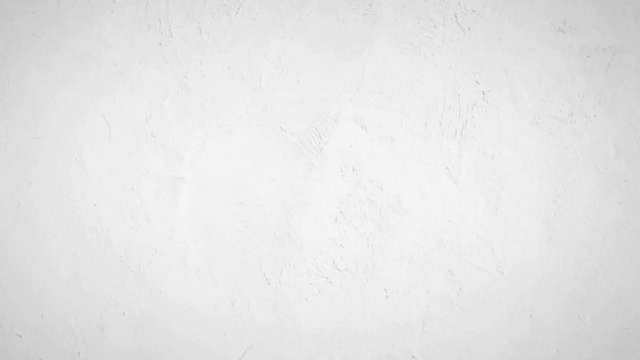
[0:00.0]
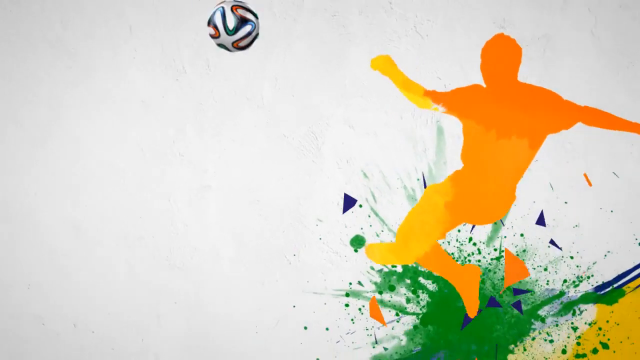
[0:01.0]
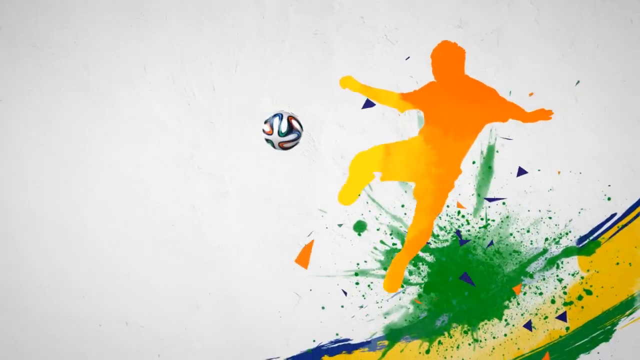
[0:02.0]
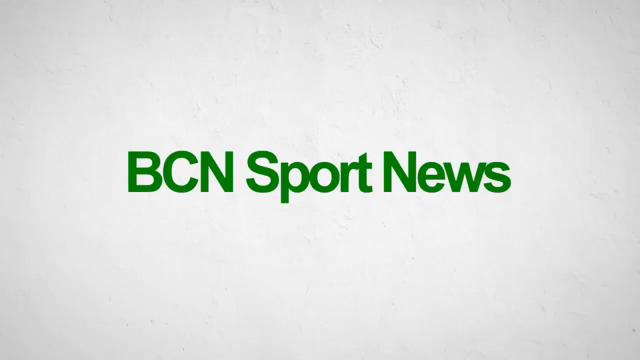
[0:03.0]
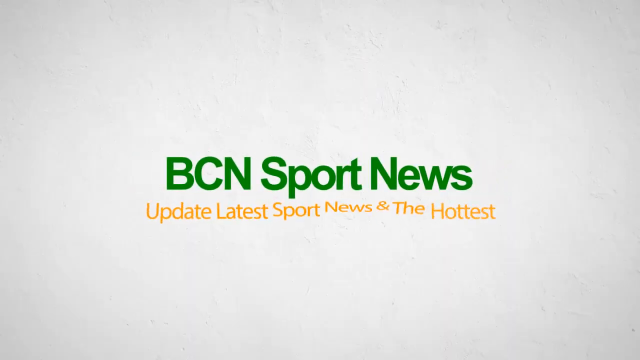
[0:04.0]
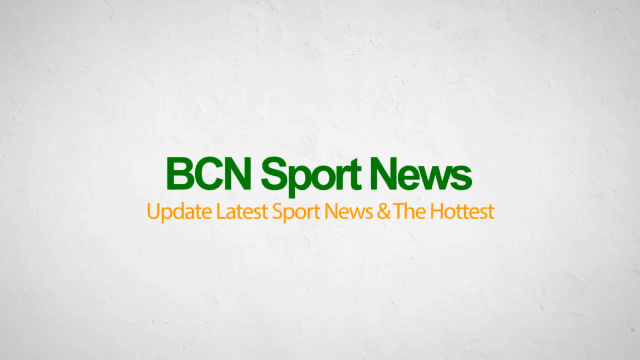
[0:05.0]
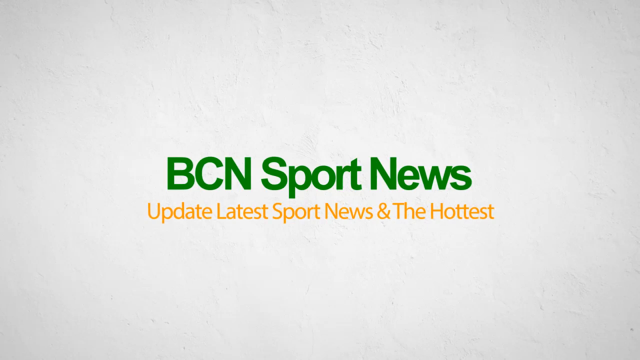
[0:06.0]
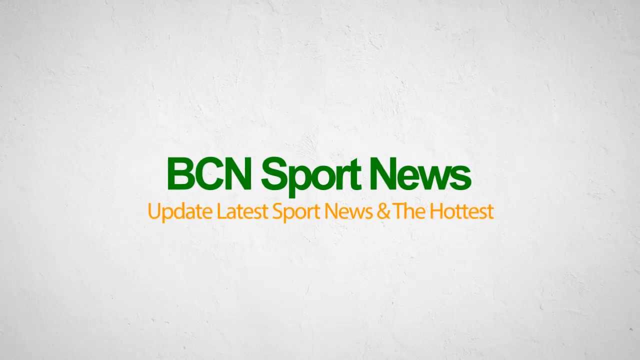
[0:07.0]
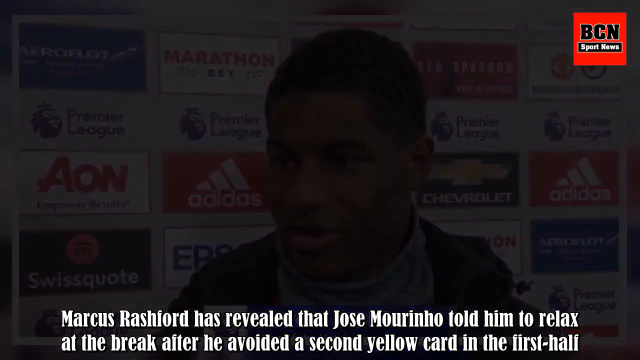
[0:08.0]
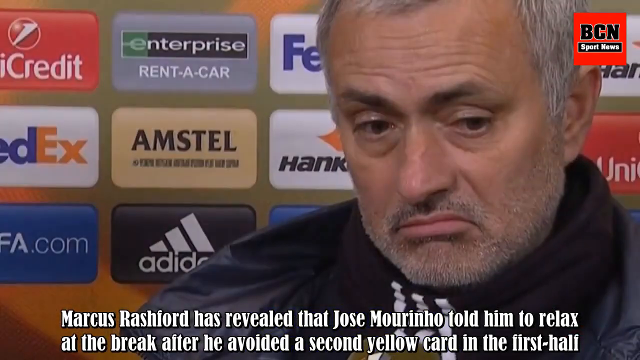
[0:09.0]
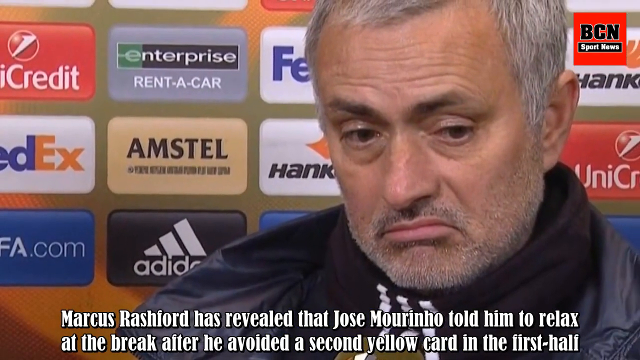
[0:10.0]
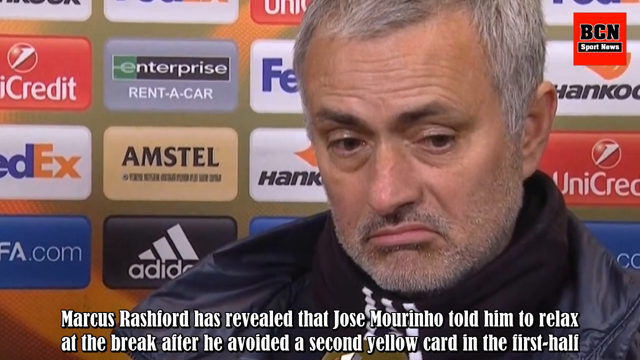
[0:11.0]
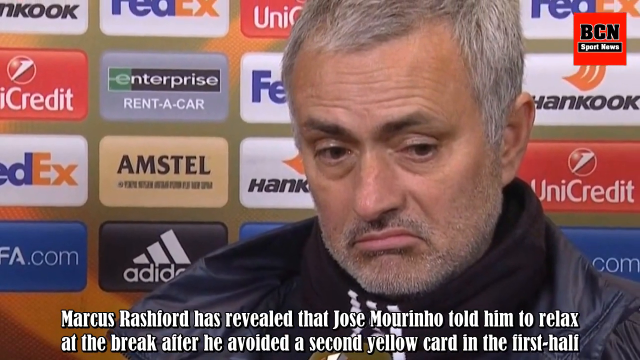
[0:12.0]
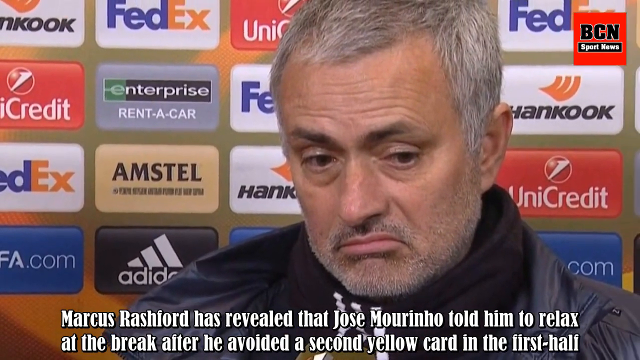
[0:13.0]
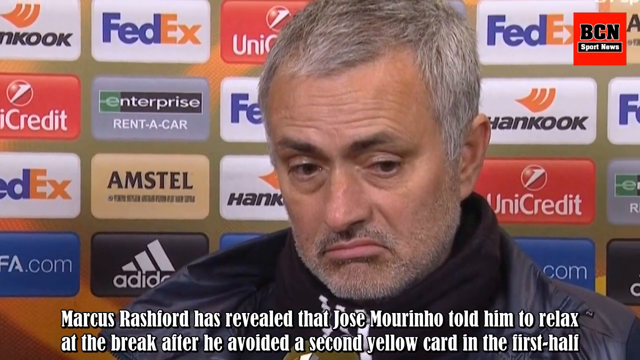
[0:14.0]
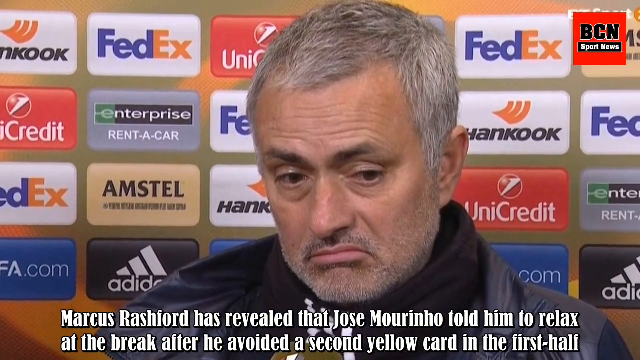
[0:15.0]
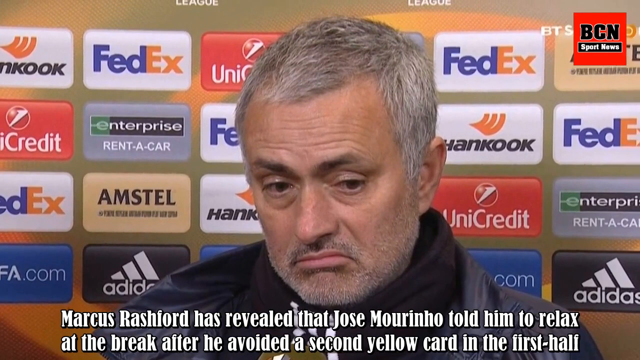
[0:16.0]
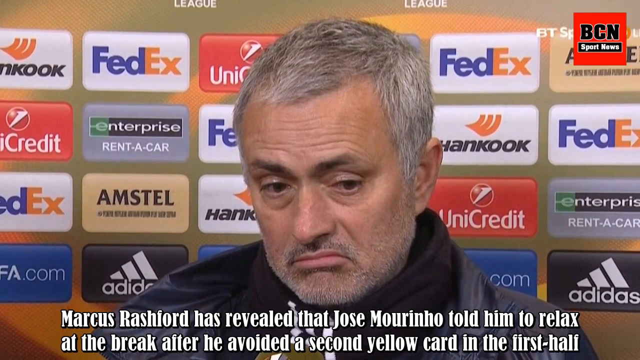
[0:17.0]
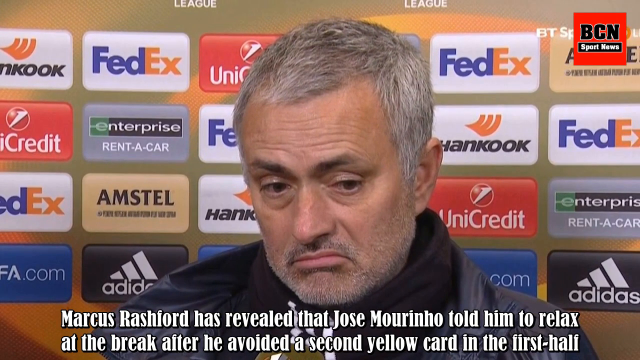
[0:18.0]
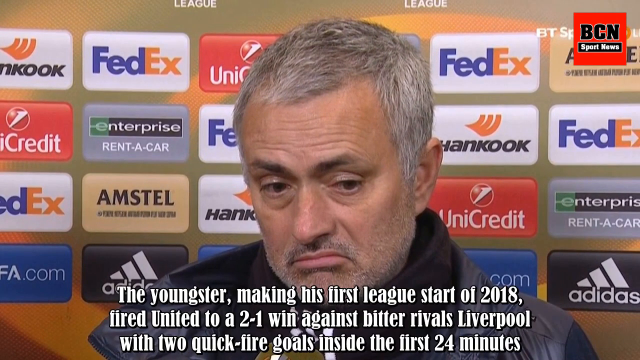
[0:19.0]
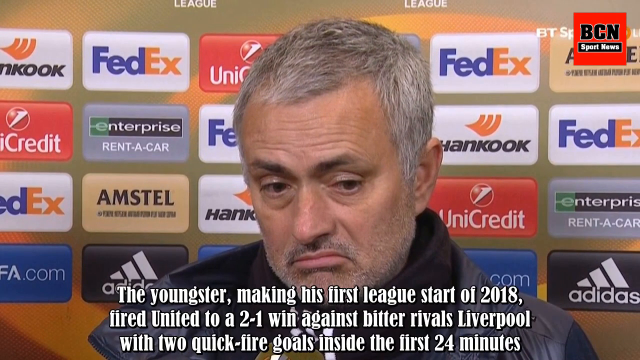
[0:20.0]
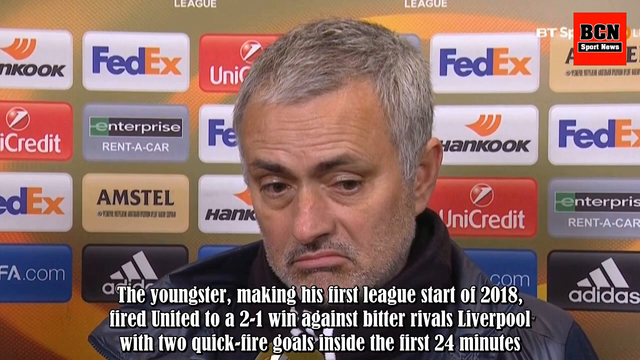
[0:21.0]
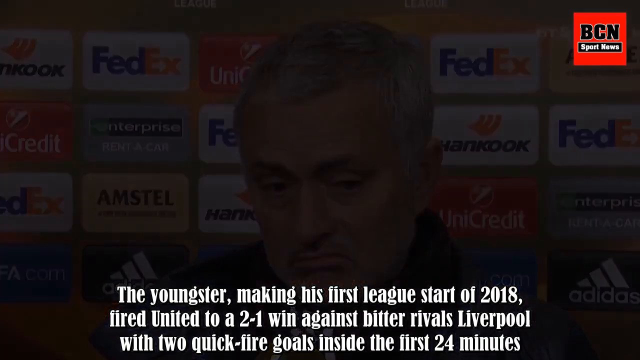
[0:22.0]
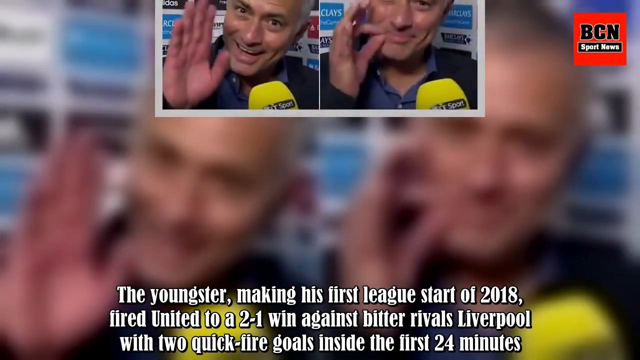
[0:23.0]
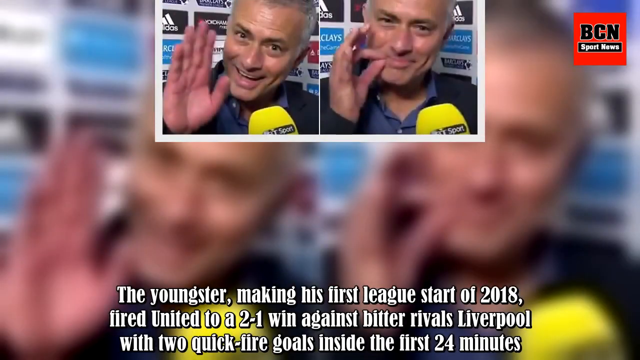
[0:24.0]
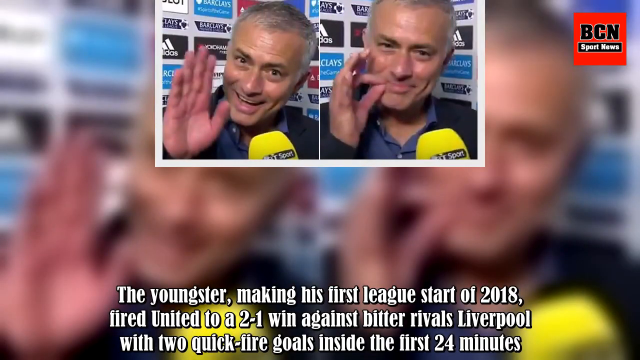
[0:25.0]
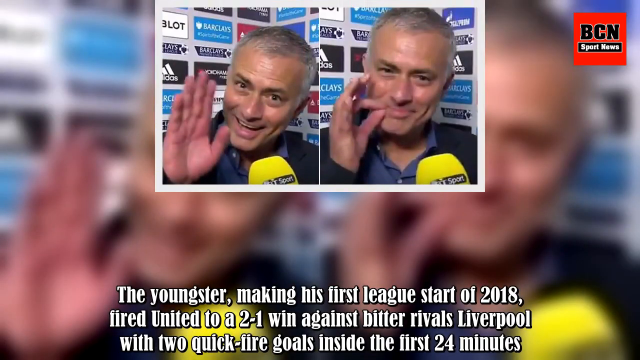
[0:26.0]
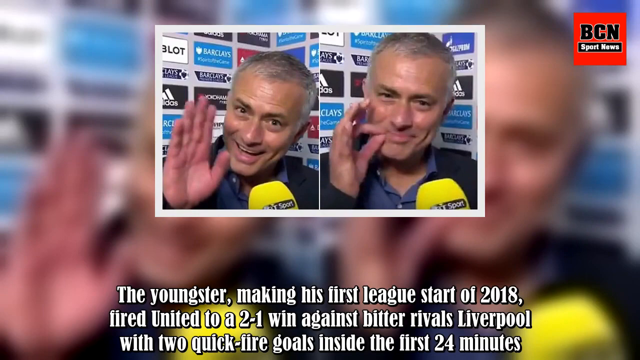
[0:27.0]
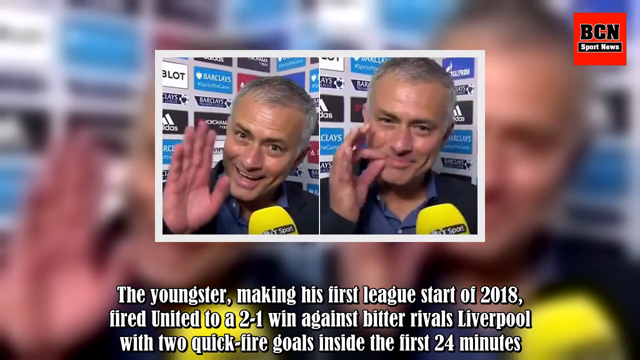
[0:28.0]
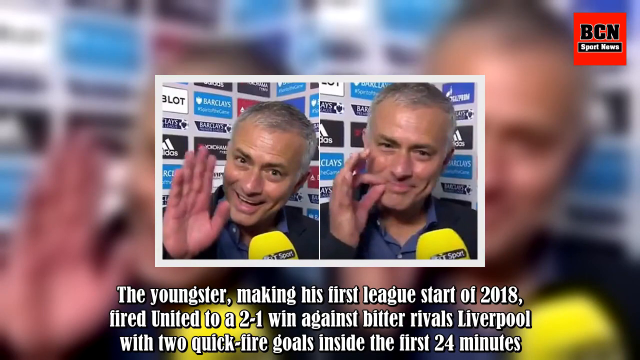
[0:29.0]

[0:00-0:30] The video appears to be a soccer presentation. It opens with a computer-graphic figure, not a real person, kicking a soccer ball toward the screen, revealing the text "BCN Sports News" in green and "Update Latest Sport News" in yellow. The picture flashes to another area where a person is seen briefly before it fades into text at the bottom reading "Marcus Rashford has revealed that Jose Marino told him to relax," with more text below that is partly out of sight. Next comes a person who looks like possibly a coach, with an upset expression, looking kind of sad; behind them are what seem to be advertisements for companies such as FedEx, Unicredit, Enterprise and Rent-A-Car. This fades out to a side-by-side picture of the same person: in one they have a hand up, in the other their hand is toward their lips.